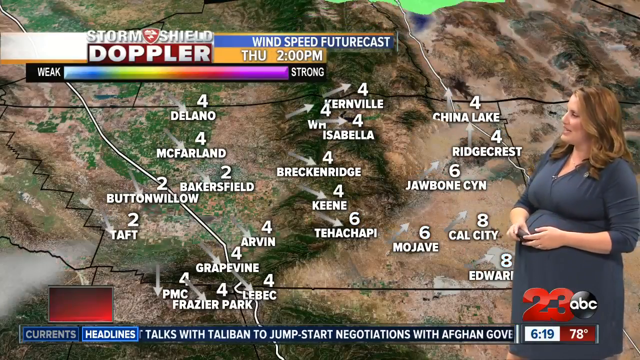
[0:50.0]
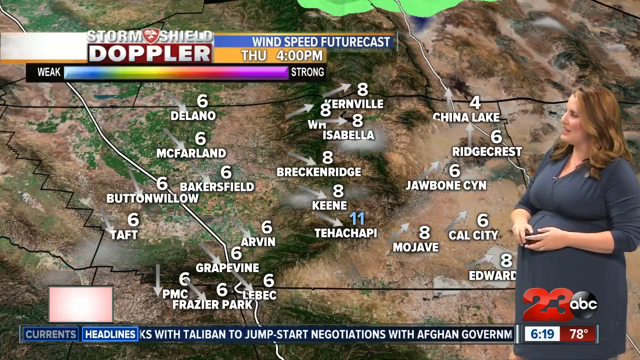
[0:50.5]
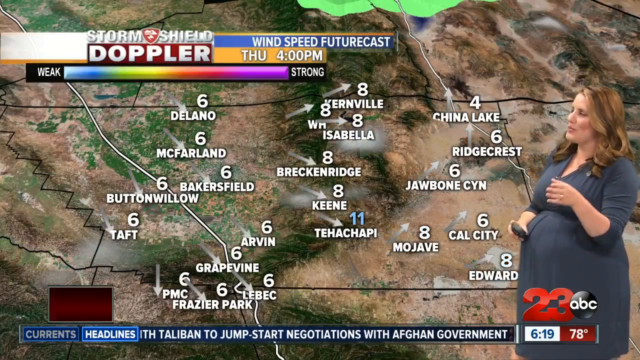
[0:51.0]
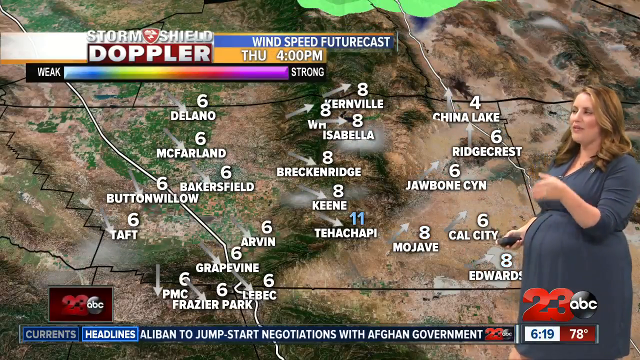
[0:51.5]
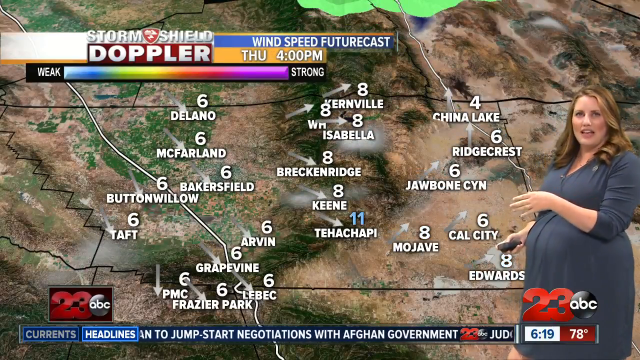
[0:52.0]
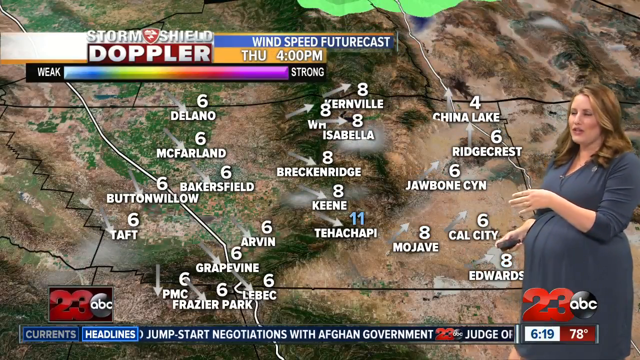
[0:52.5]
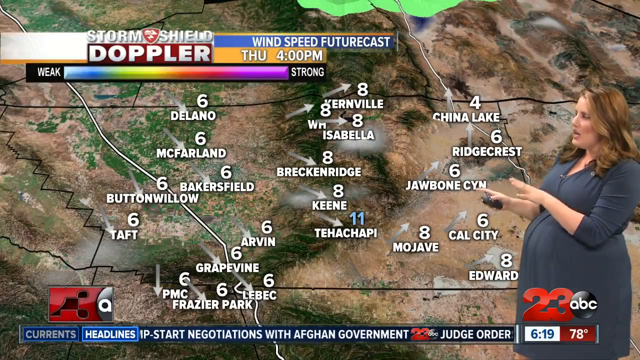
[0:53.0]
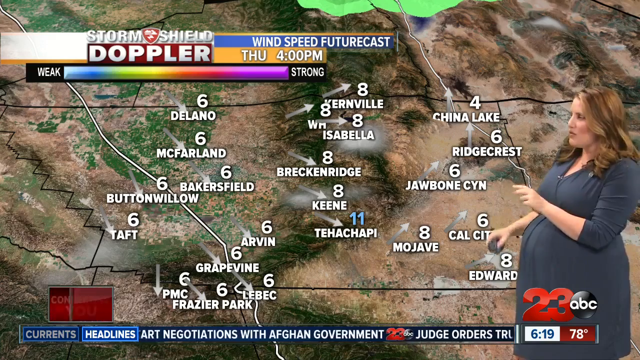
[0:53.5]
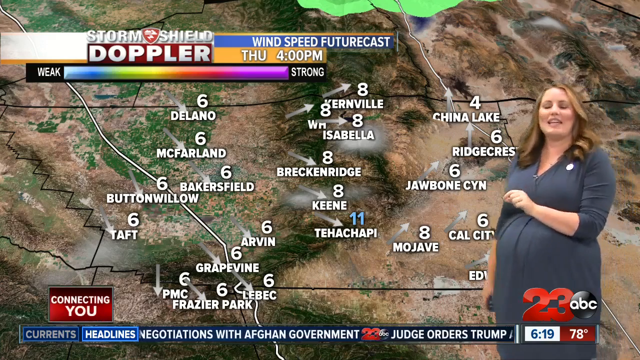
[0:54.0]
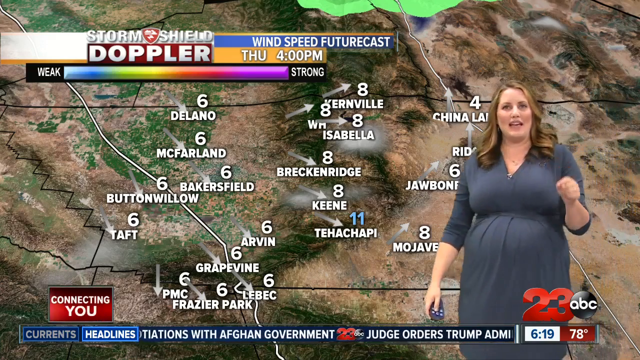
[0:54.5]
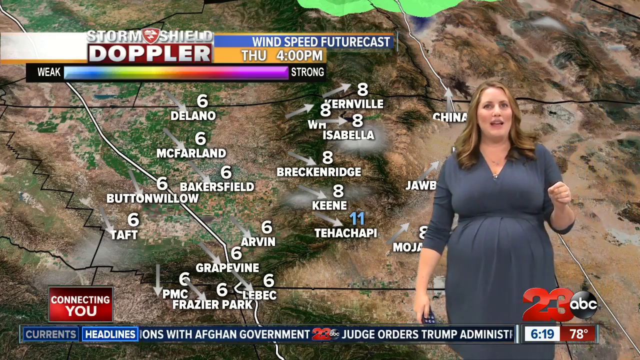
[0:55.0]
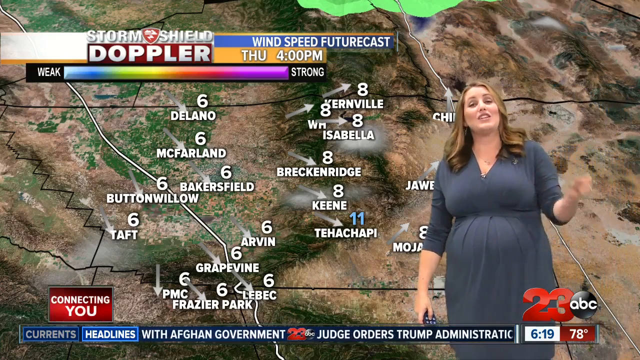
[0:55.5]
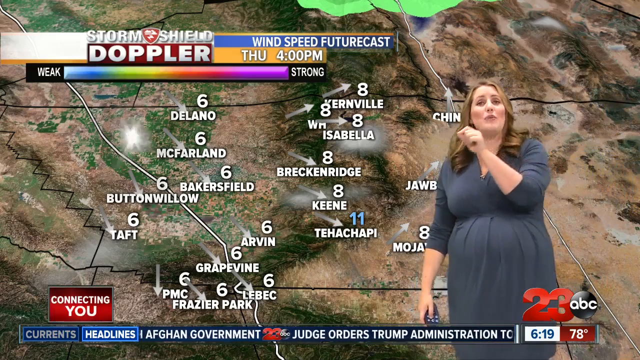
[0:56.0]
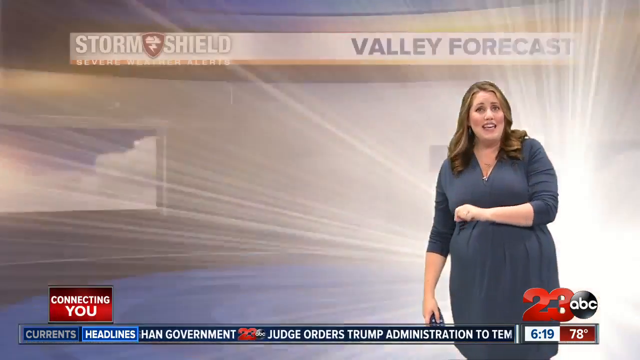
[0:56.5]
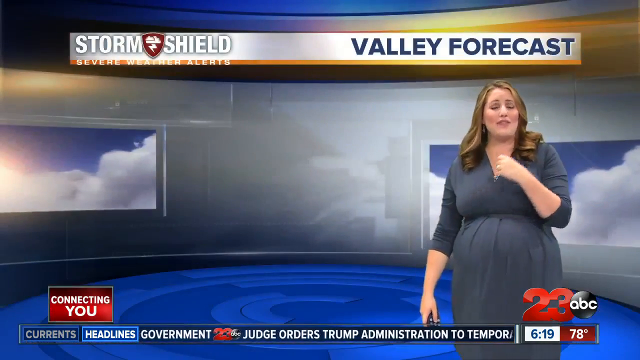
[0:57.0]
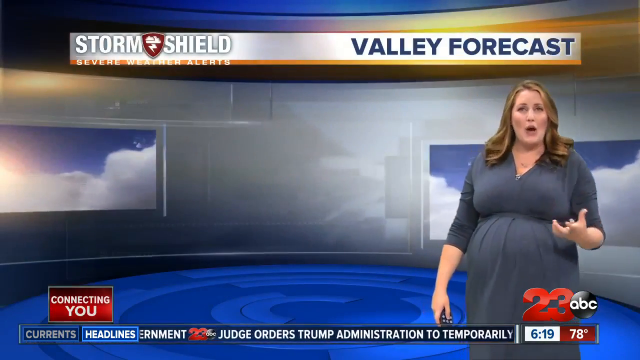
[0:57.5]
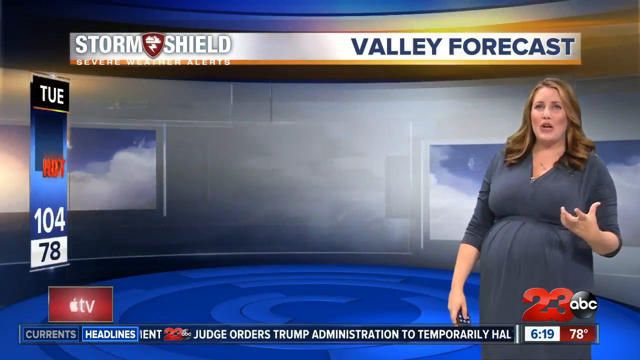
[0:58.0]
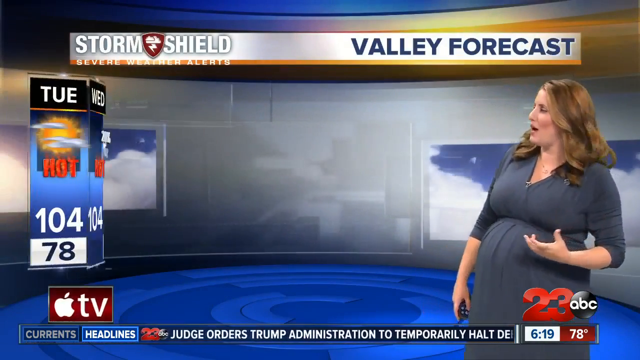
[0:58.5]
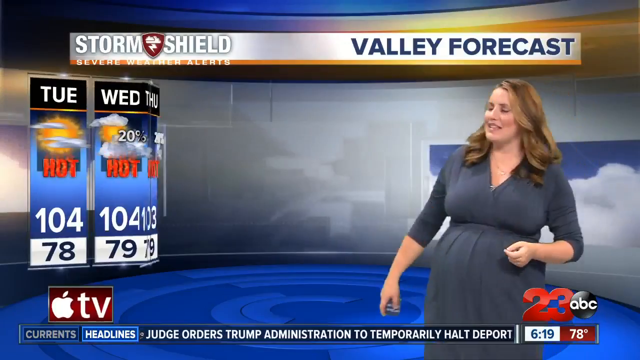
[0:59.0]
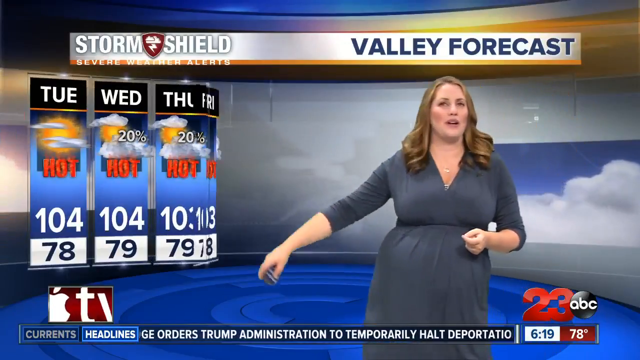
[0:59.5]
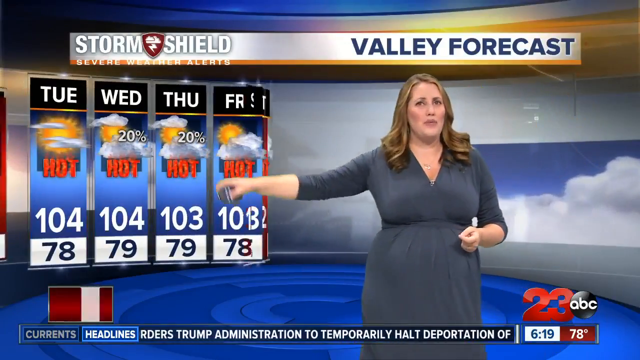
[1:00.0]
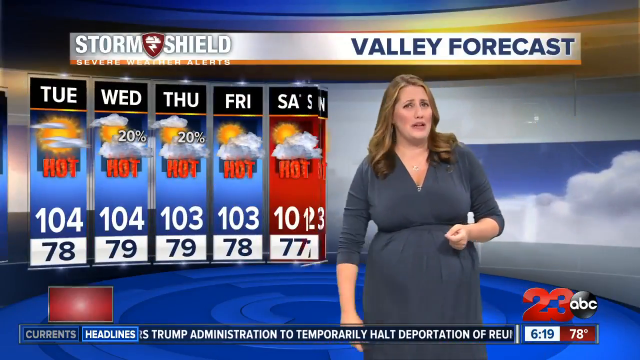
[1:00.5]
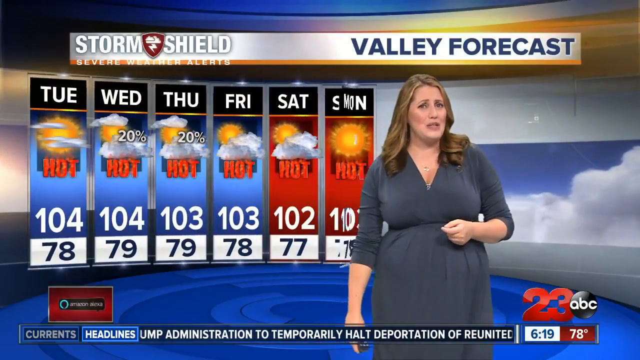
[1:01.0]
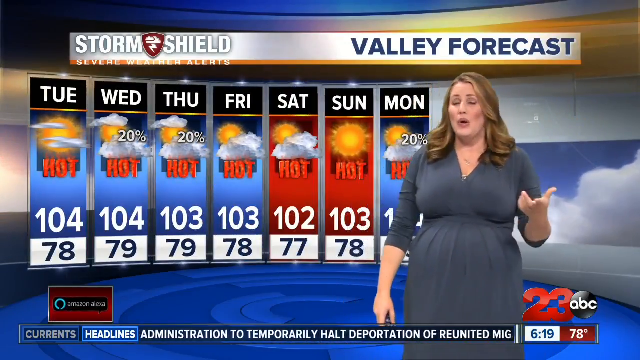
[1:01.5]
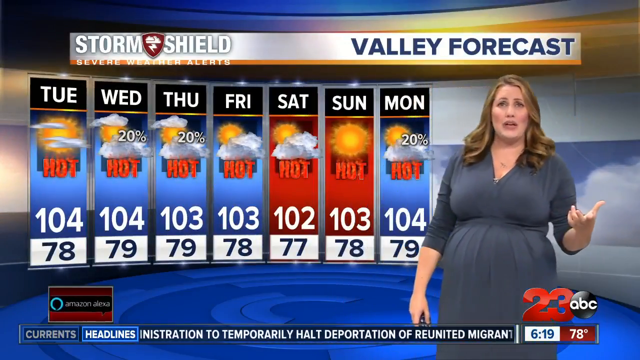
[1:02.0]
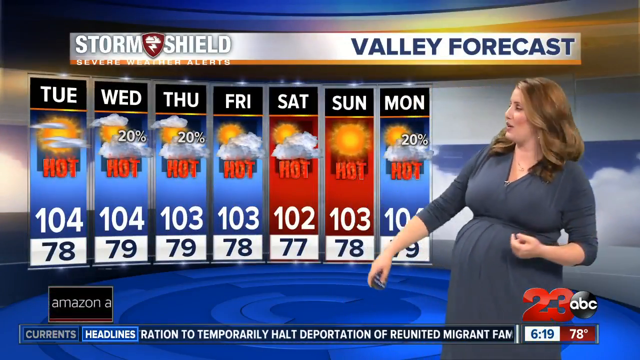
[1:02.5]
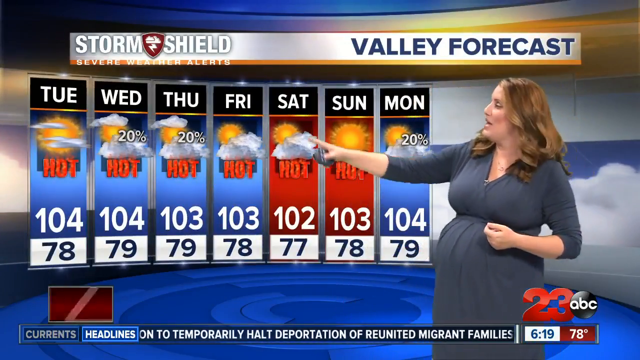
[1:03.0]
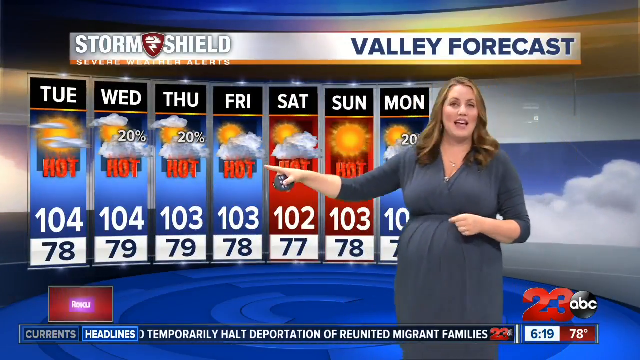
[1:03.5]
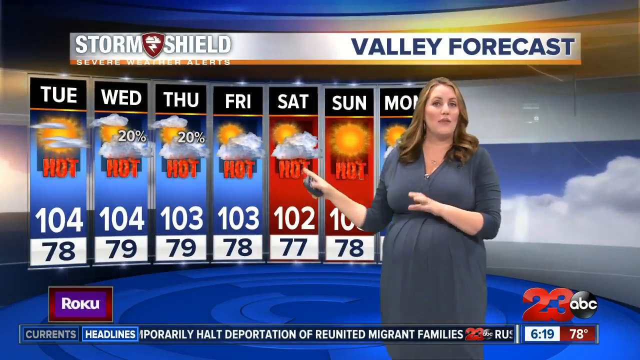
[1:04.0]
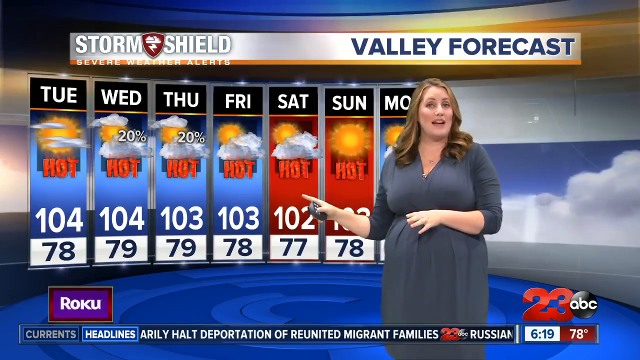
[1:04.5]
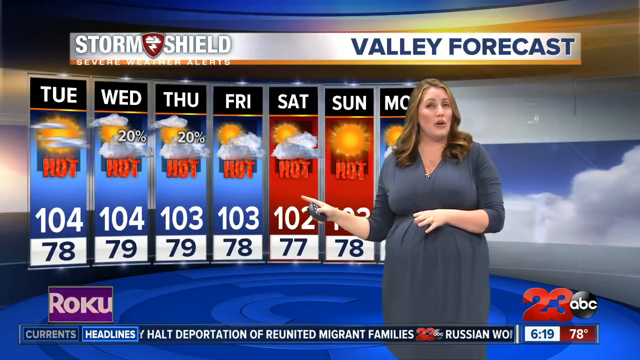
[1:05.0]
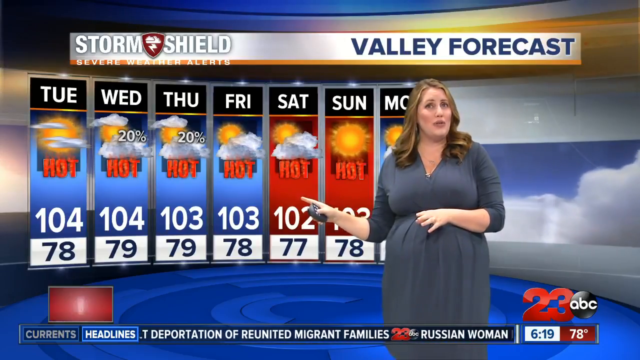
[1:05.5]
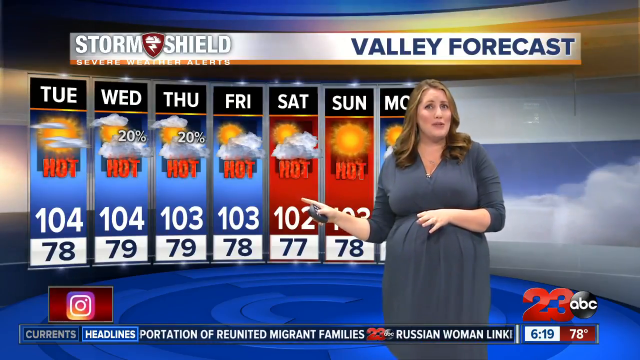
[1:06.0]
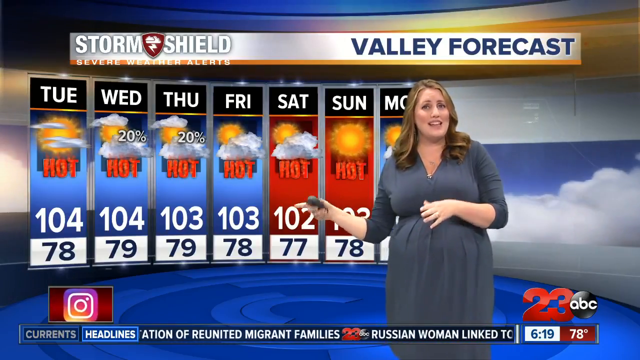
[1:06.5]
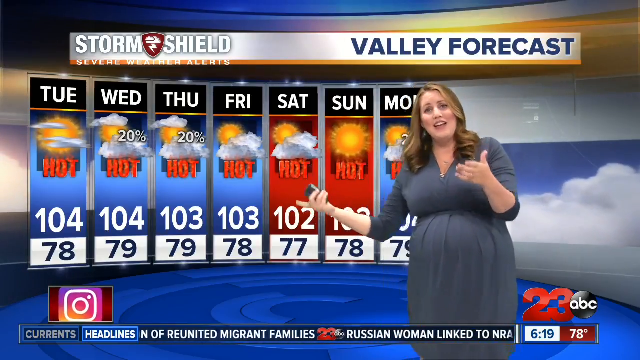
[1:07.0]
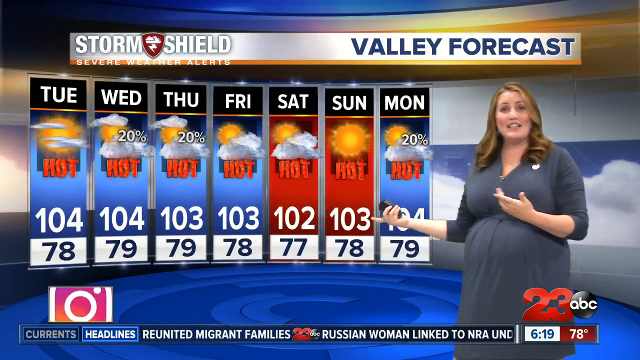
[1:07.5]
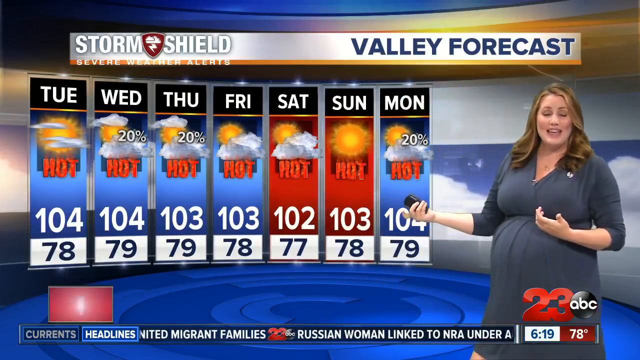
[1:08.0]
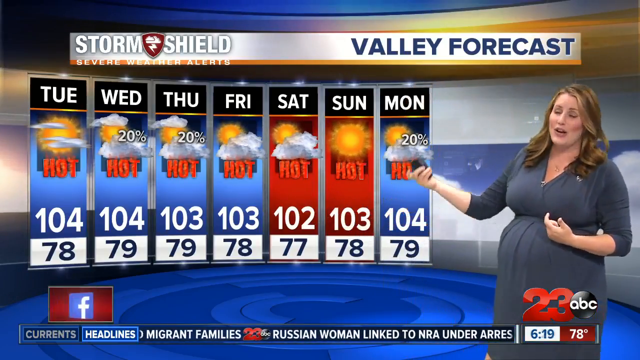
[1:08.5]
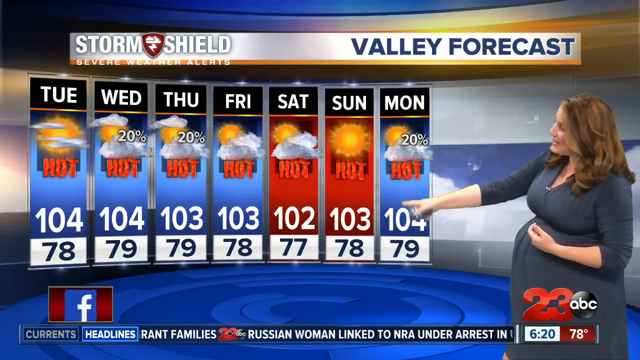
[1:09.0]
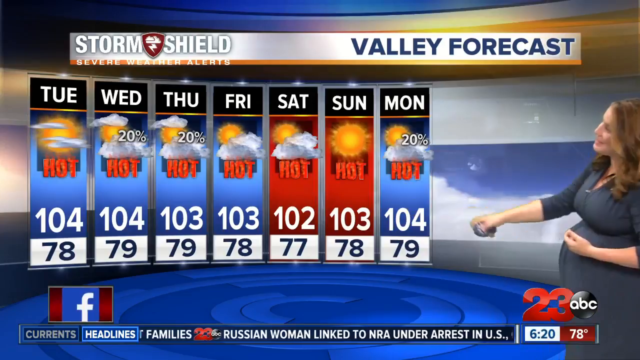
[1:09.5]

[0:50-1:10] The reporter in blue presents a wind speed futurecast. The "Storm Shield Doppler" map reads "Thursday 2 p.m." with a weak-to-strong scale and shows cities and towns including Delano, McFarland, Buttonwillow, Taft, Arvin, Grapevine, Fraser Park, Mojave, Ridgecrest, Breckenridge and Keen. Arrows show wind speed and direction. A long-range forecast then lists Tuesday, Wednesday, Thursday, Friday, Saturday, Sunday, Monday, Tuesday, Wednesday and Thursday with average highs and lows, which seem fairly hot.